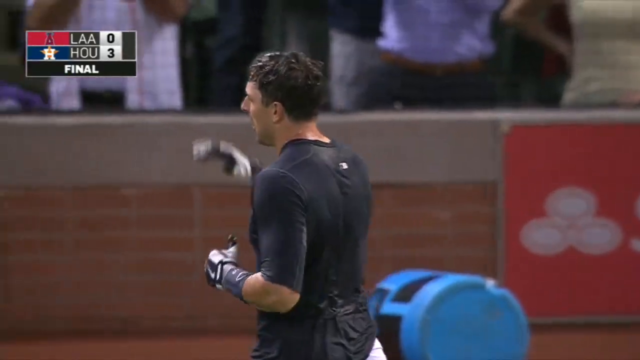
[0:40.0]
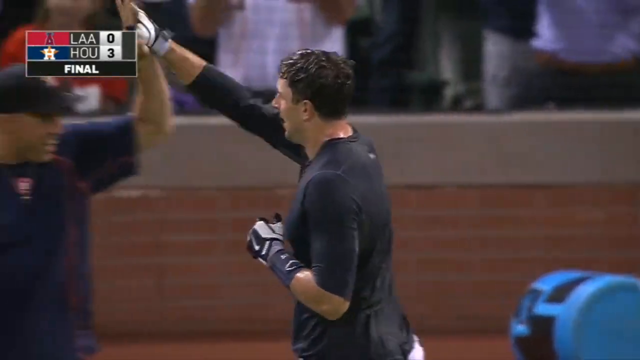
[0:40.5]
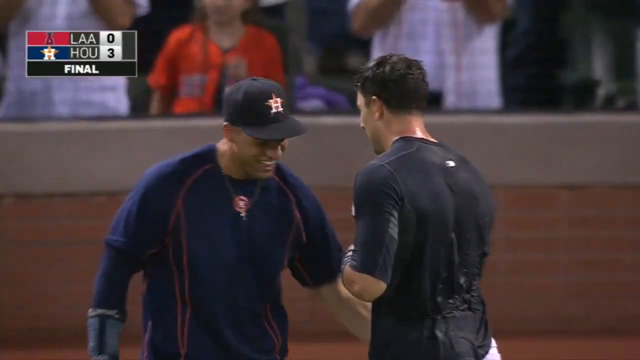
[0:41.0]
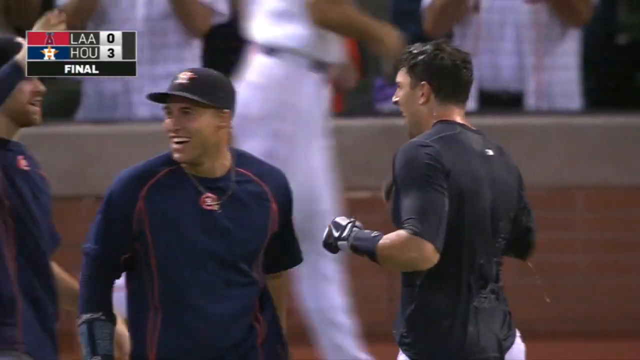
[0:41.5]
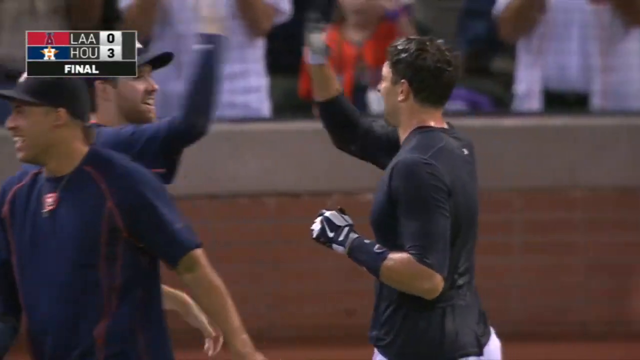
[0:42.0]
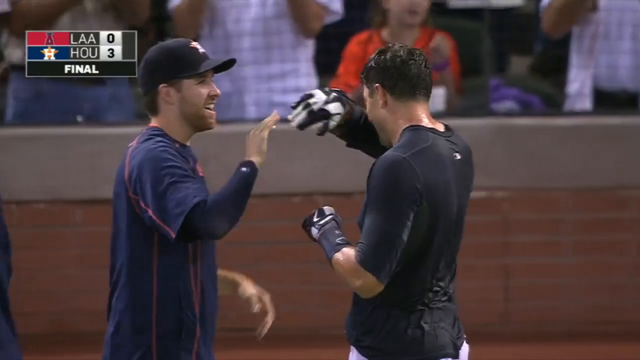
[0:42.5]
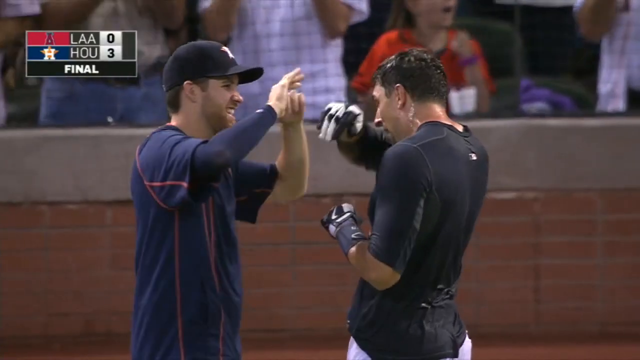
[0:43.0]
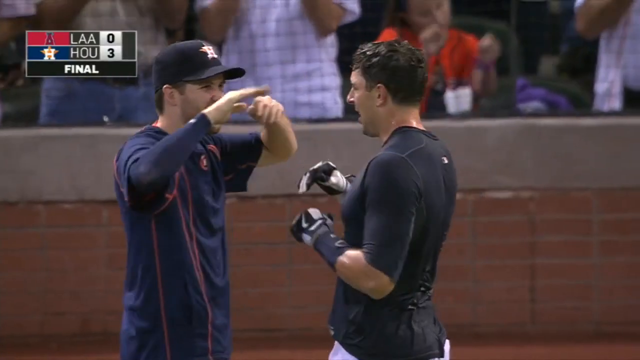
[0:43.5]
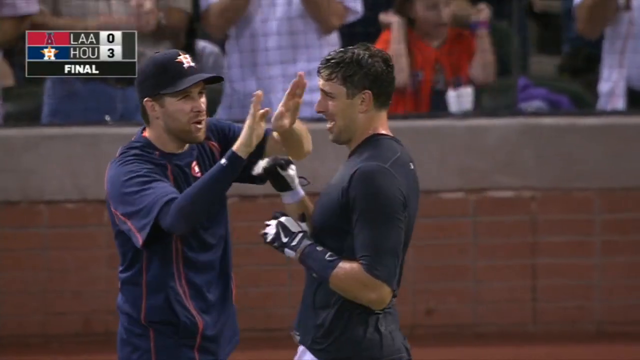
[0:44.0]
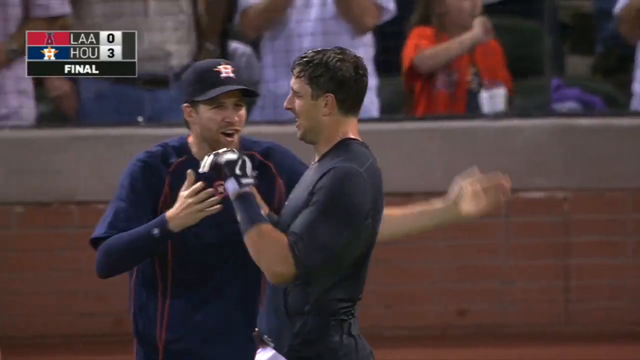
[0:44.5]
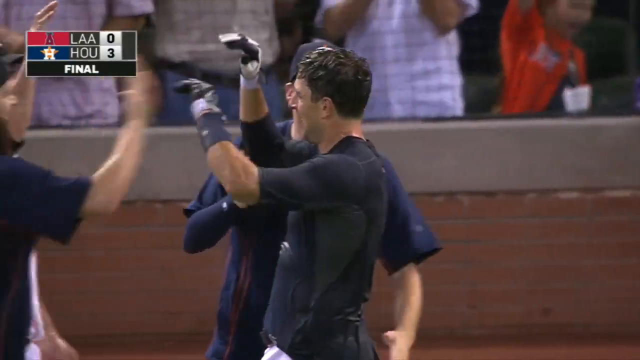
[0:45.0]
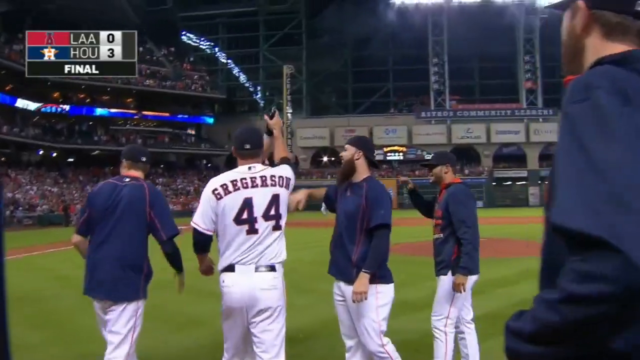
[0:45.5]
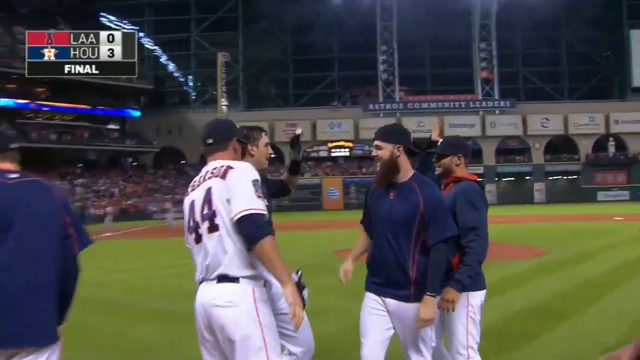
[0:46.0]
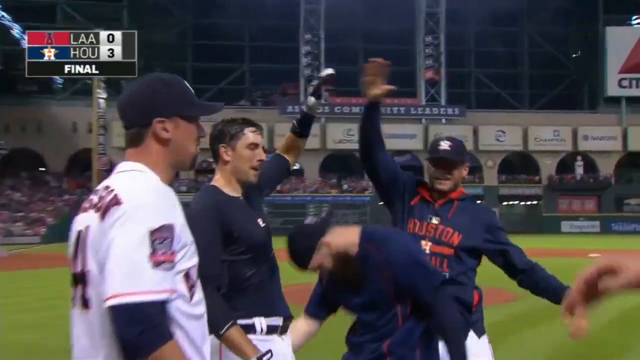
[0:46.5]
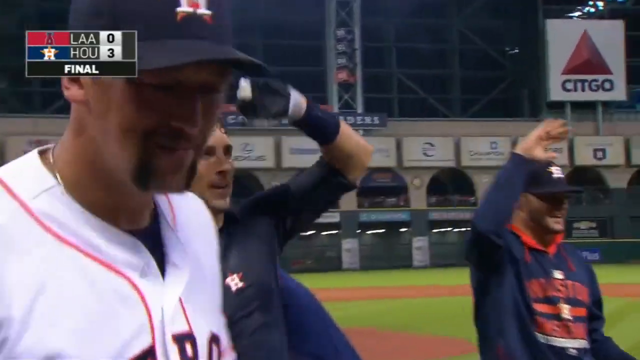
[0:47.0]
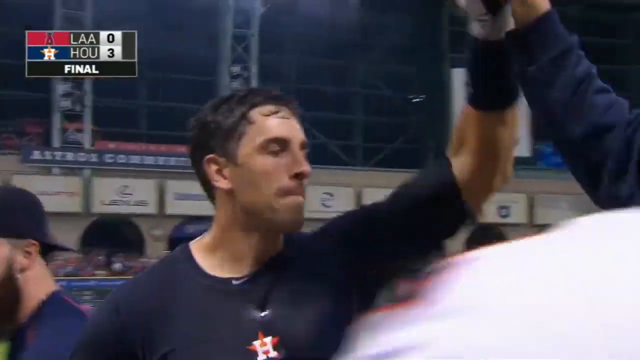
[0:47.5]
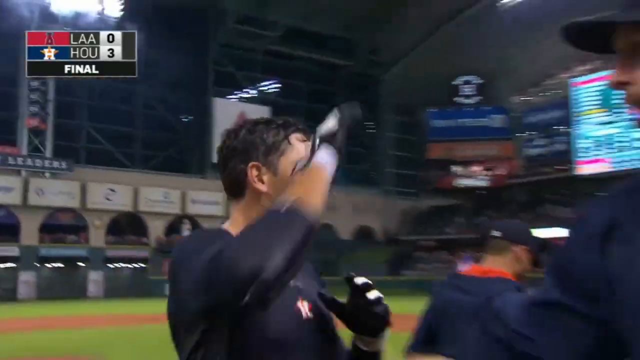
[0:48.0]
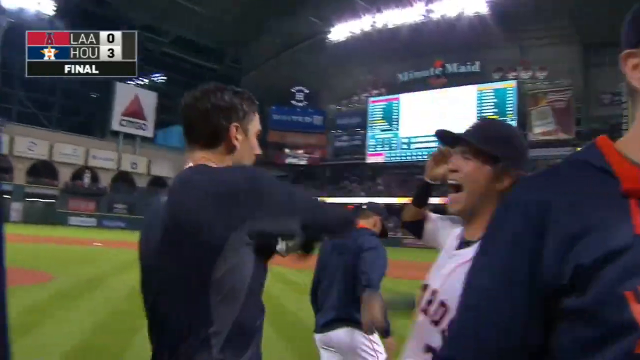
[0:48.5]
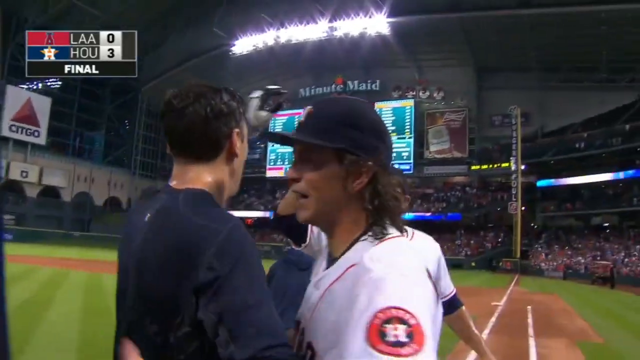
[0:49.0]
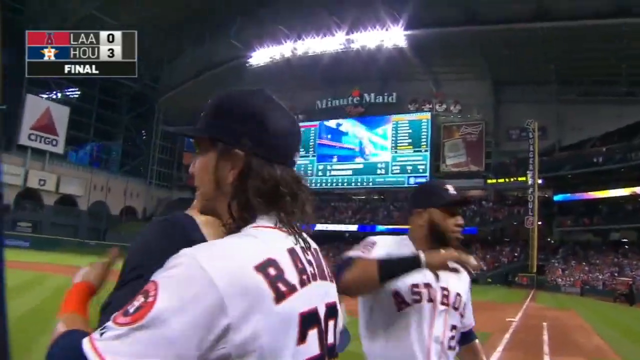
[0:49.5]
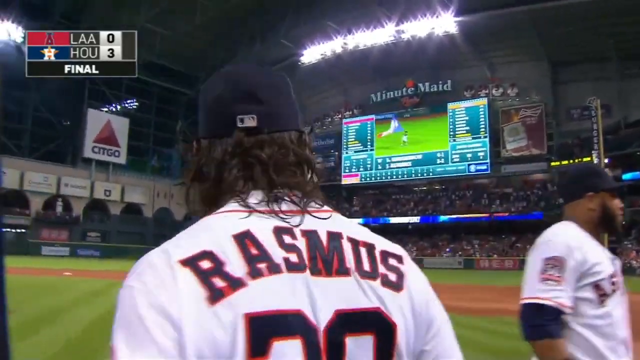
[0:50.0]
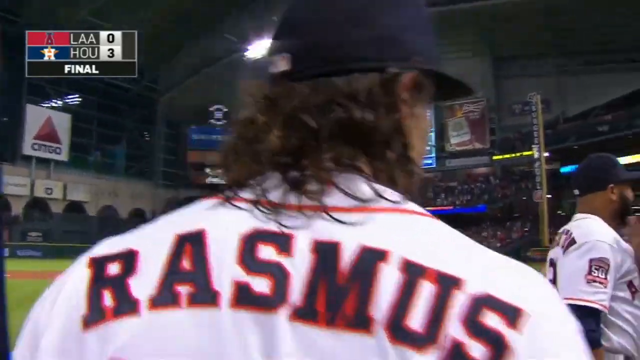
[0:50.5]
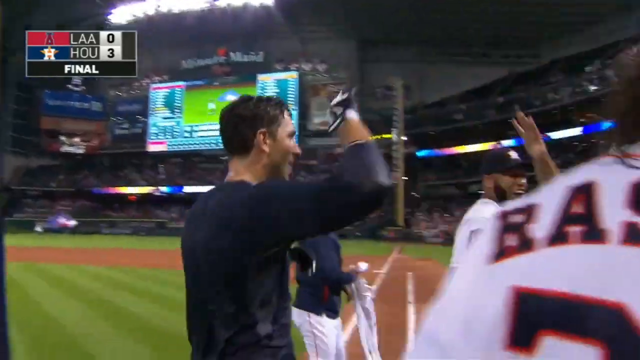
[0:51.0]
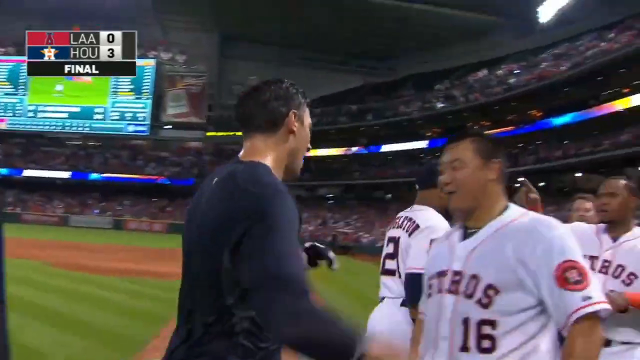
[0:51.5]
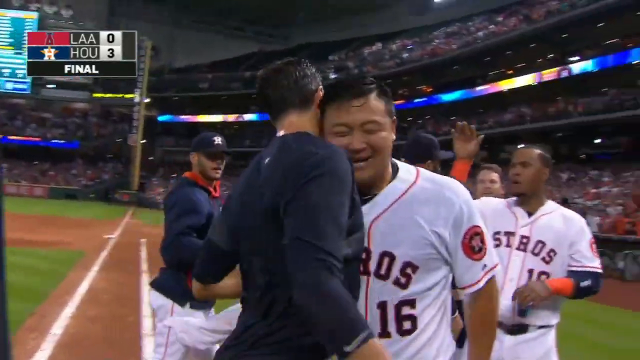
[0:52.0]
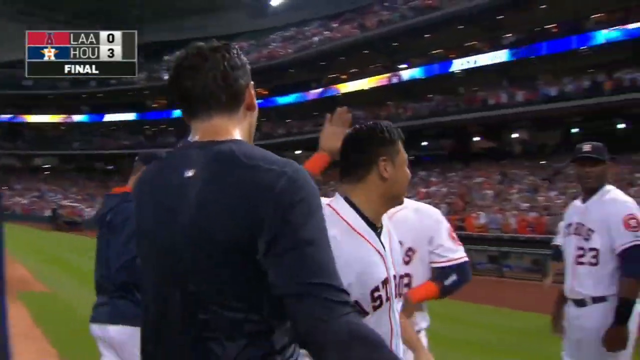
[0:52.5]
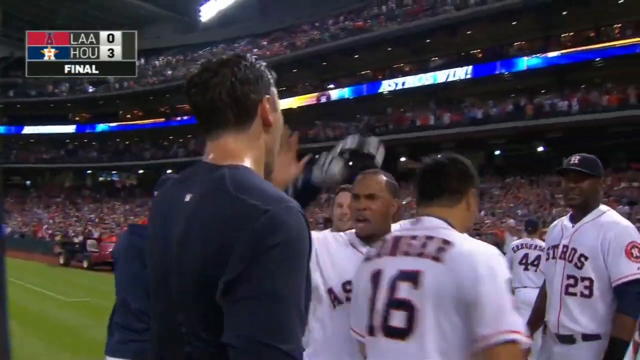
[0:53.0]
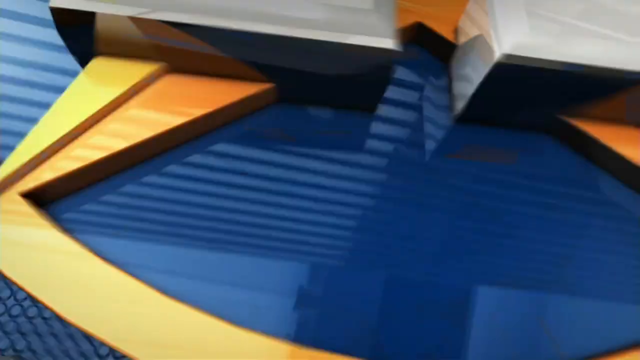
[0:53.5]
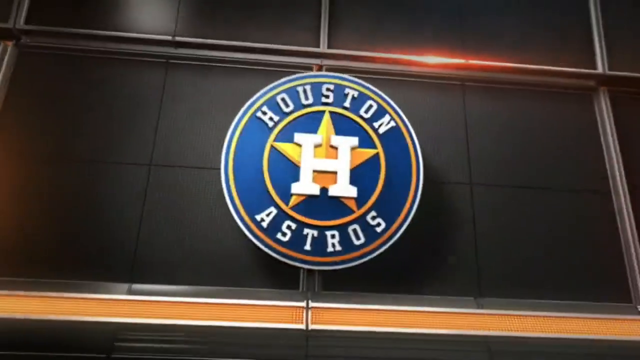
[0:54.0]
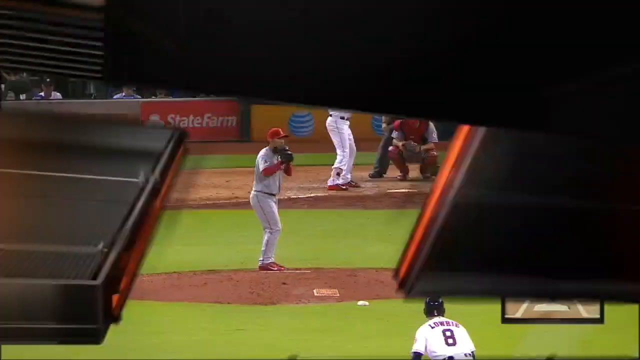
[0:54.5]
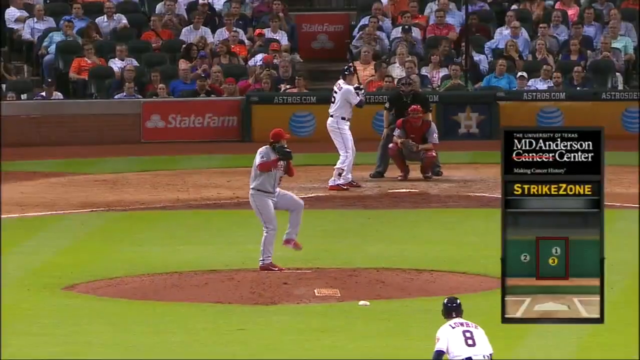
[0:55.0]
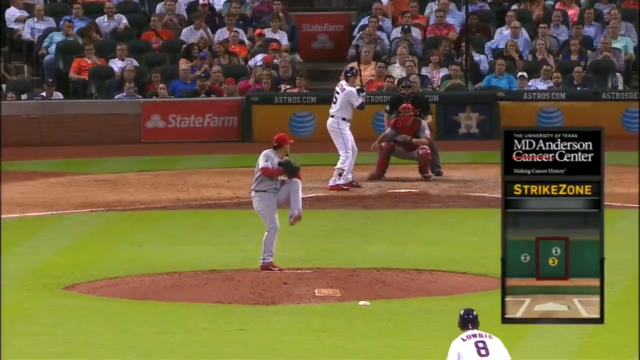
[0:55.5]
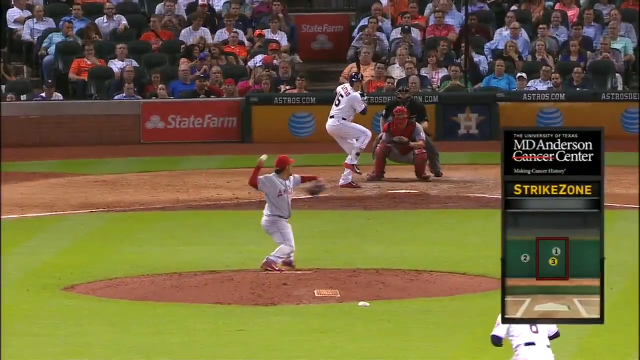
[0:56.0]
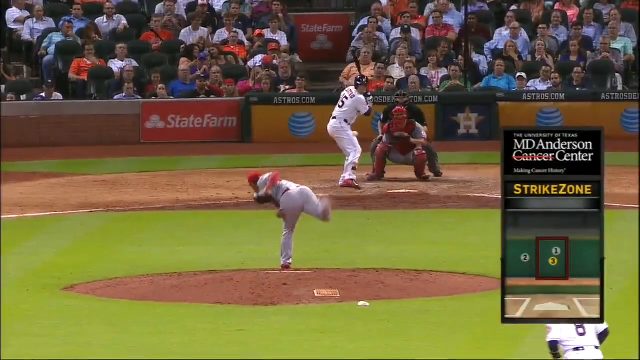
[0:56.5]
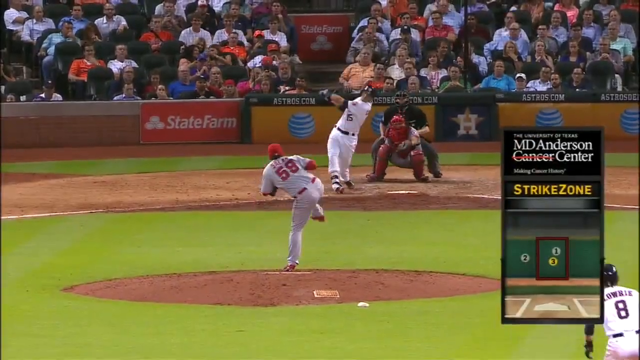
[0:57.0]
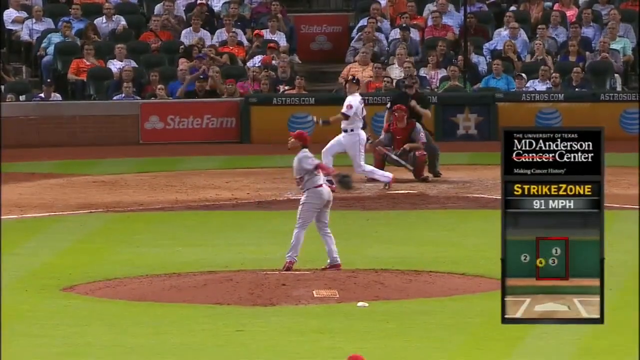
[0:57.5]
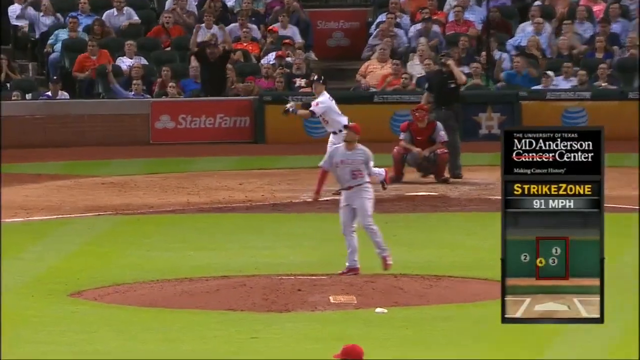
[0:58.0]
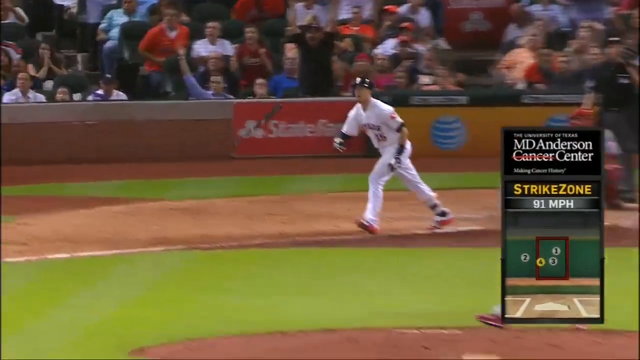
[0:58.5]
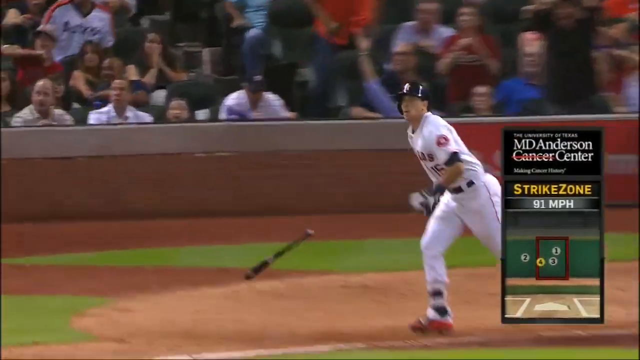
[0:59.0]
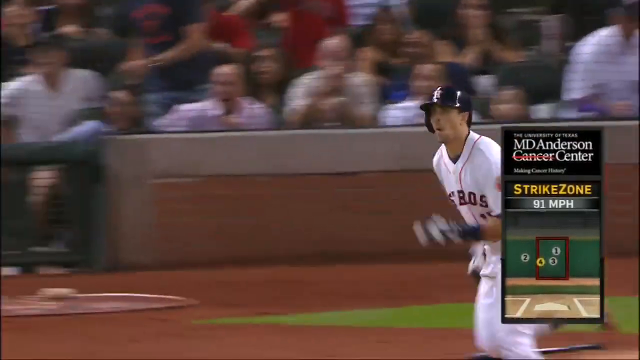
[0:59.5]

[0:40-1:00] The player gives high fives to the coach, celebrating the win. His dark shirt and dark hair are completely wet because a couple of players dumped a couple of buckets of water on him around home plate. He continues to celebrate with the team, while fans behind home plate clap and cheer. The score bug in the top left of the screen shows the win by a score of three to nothing. A replay follows: the Los Angeles pitcher winds up and throws toward home plate, and a strike zone K graphic in the bottom right, sponsored by the MD Anderson Cancer Center, shows where the pitch was located when the player hit the home run and began rounding the bases.